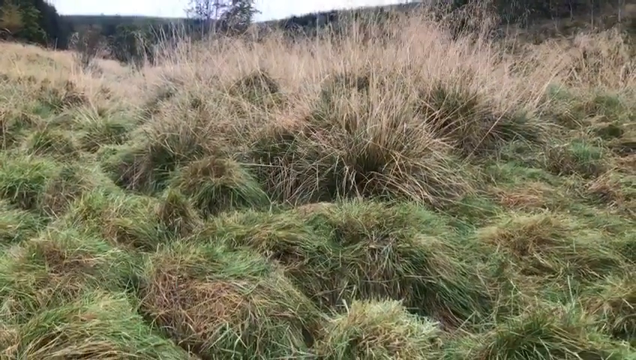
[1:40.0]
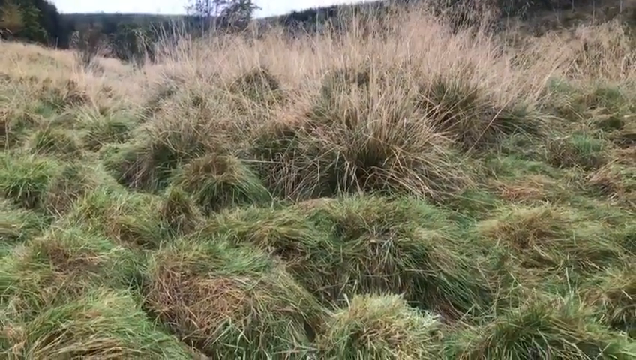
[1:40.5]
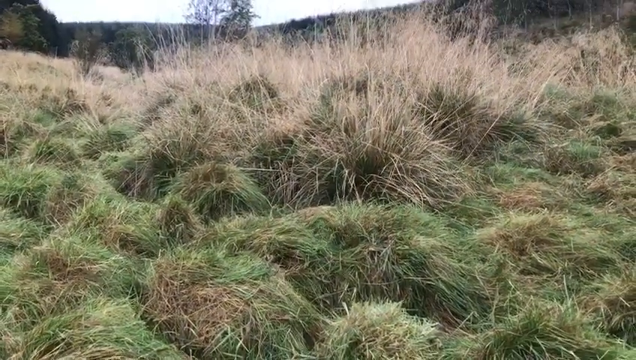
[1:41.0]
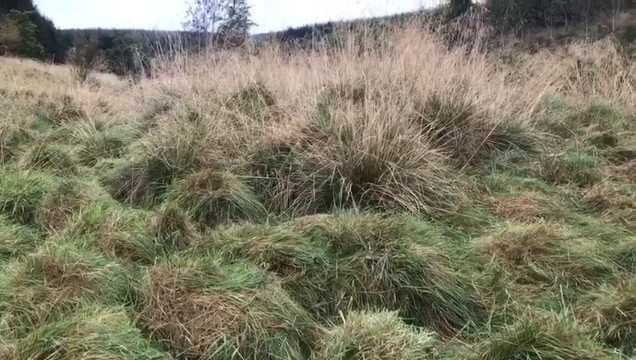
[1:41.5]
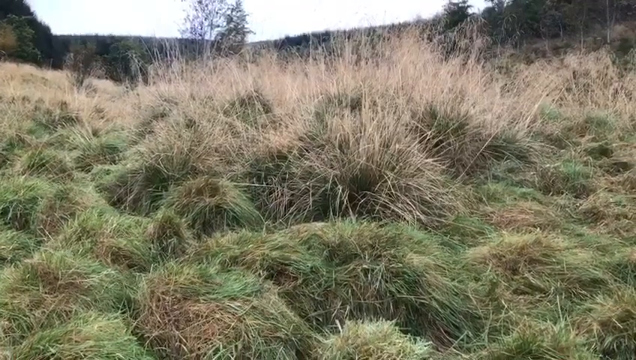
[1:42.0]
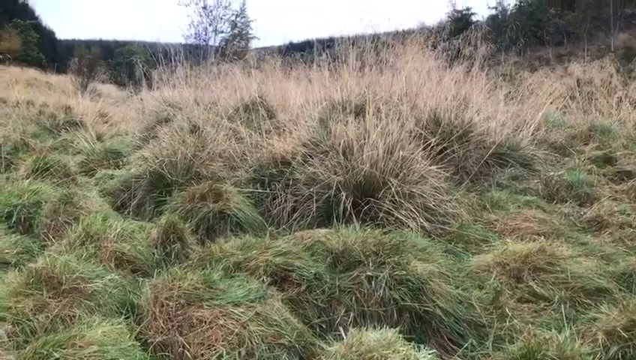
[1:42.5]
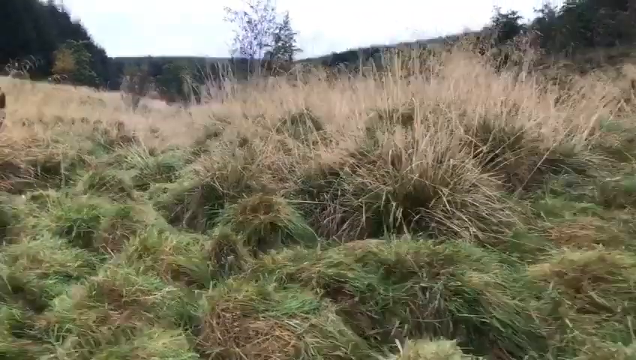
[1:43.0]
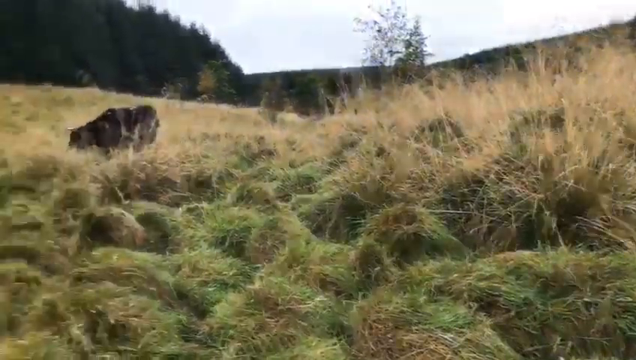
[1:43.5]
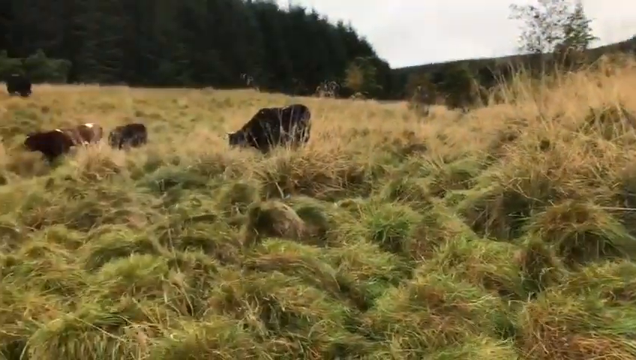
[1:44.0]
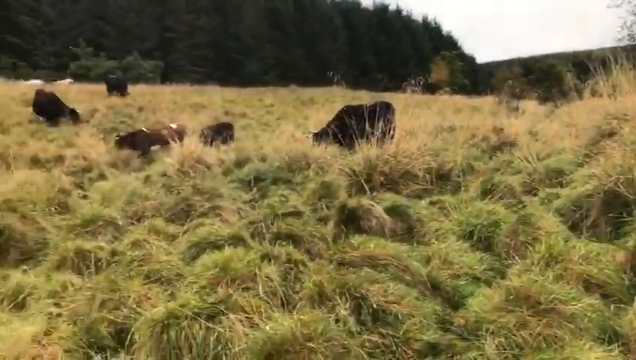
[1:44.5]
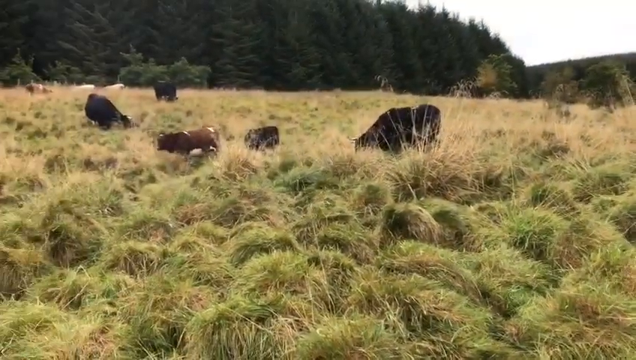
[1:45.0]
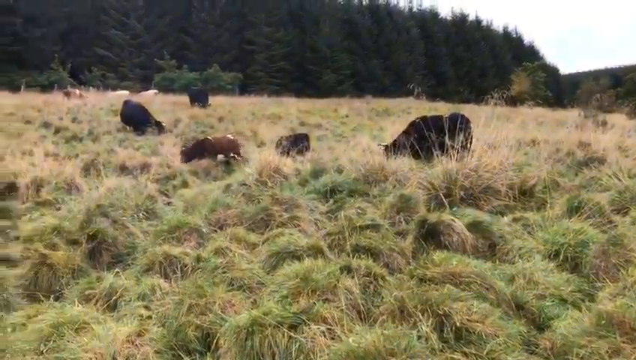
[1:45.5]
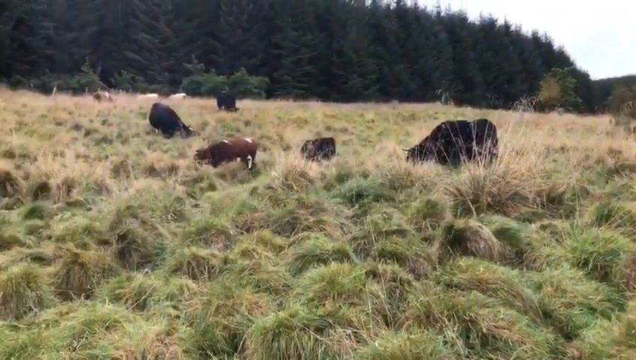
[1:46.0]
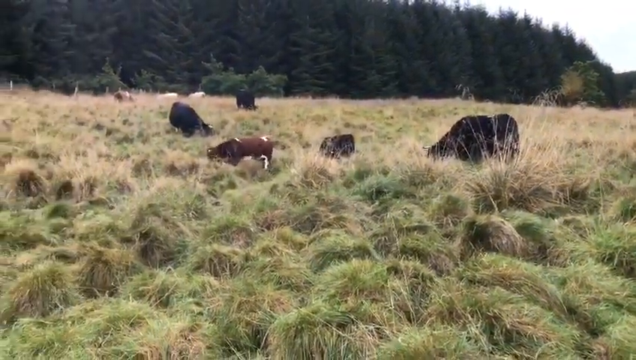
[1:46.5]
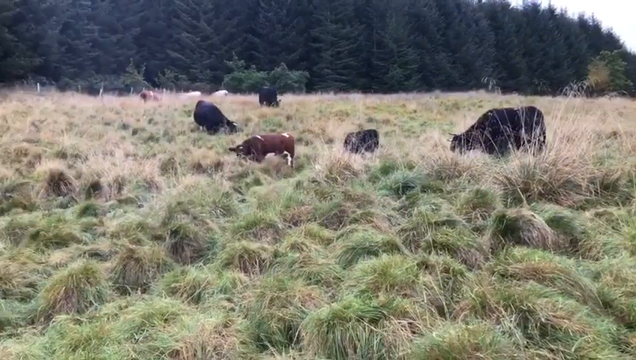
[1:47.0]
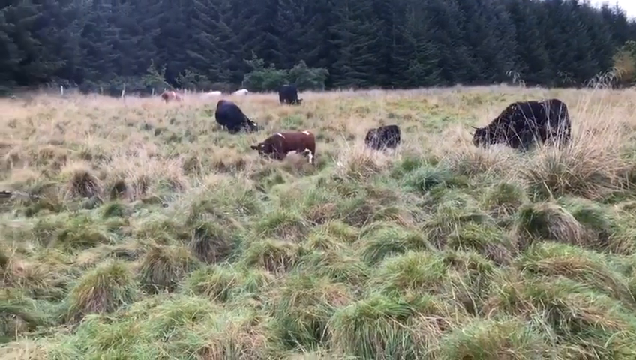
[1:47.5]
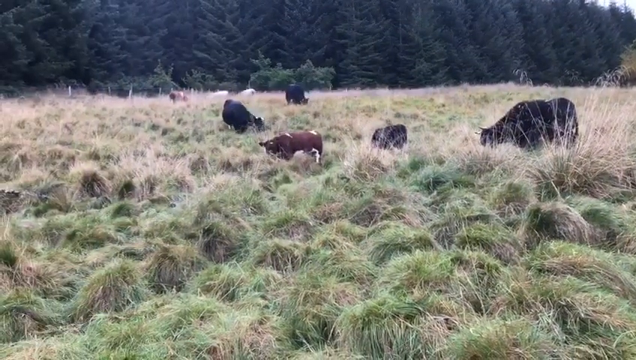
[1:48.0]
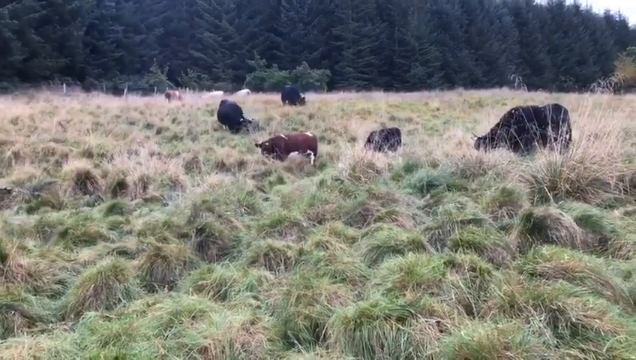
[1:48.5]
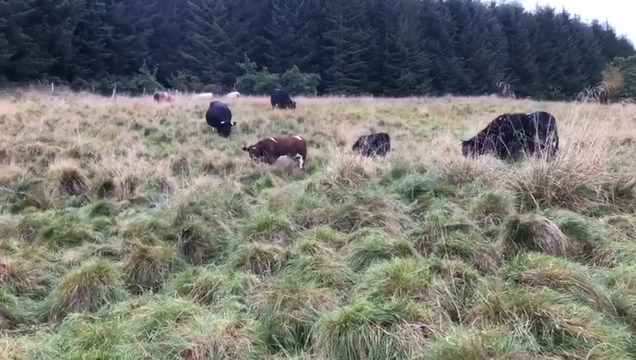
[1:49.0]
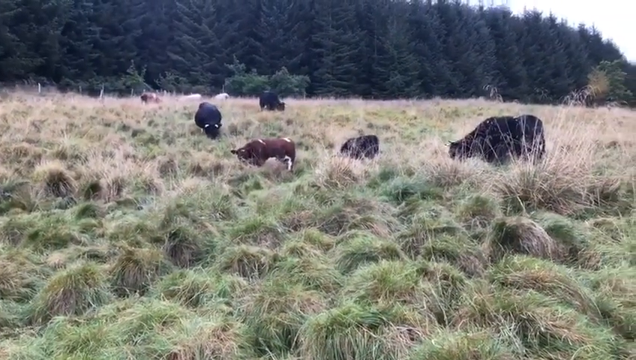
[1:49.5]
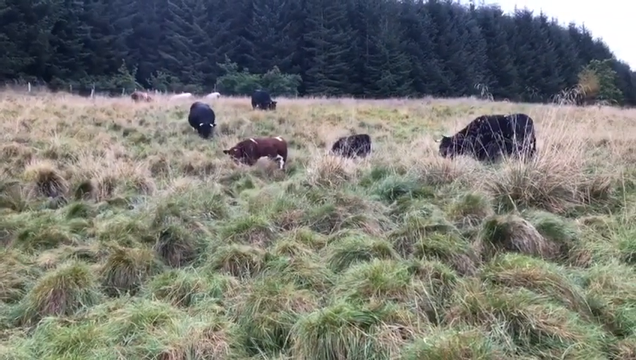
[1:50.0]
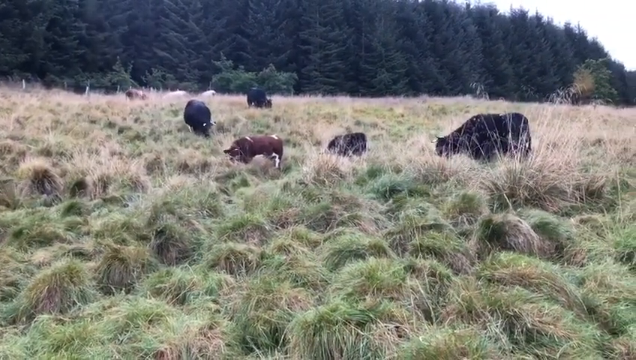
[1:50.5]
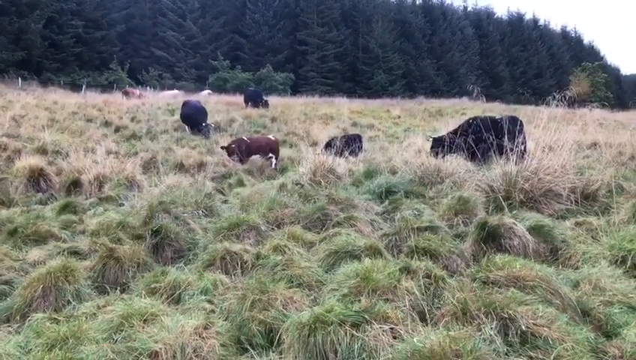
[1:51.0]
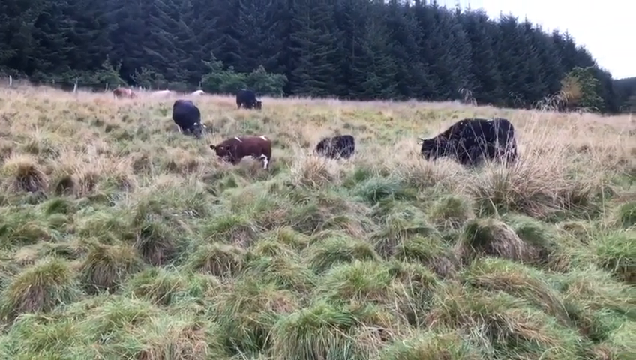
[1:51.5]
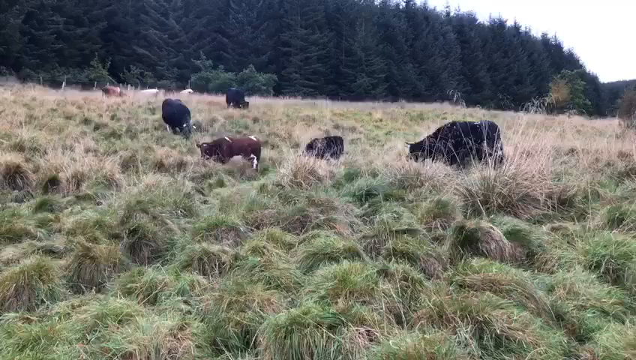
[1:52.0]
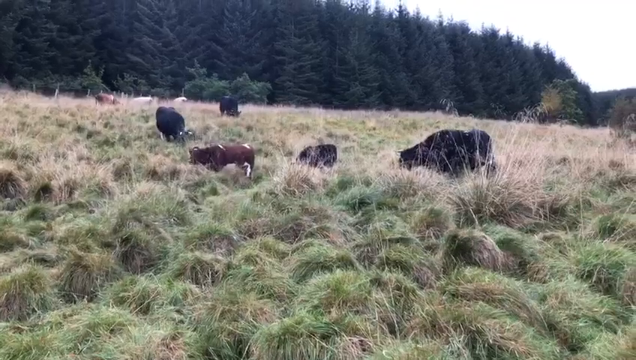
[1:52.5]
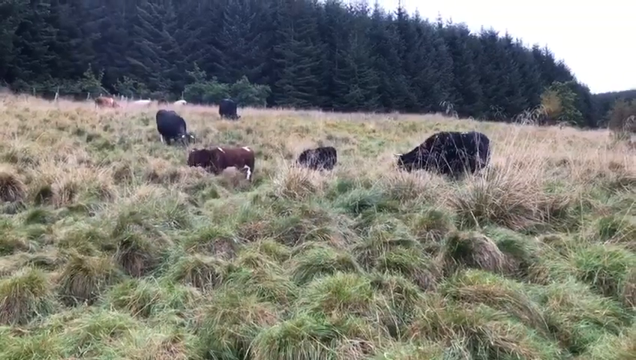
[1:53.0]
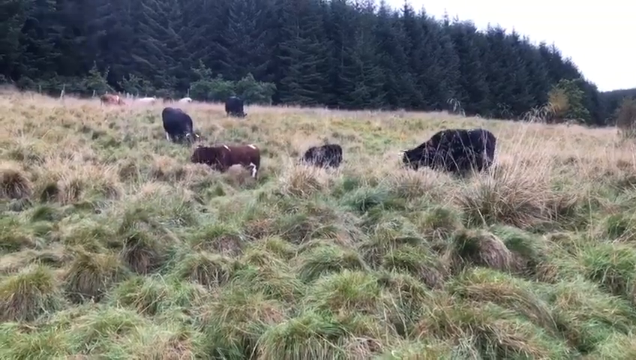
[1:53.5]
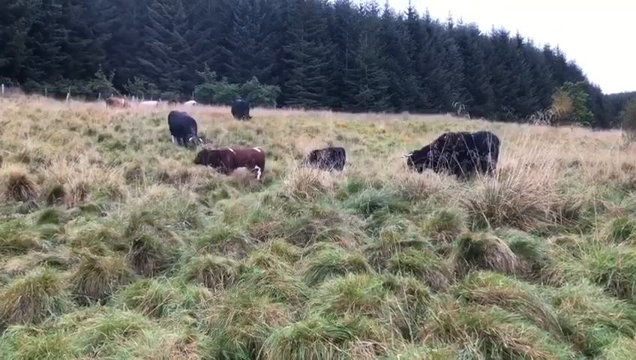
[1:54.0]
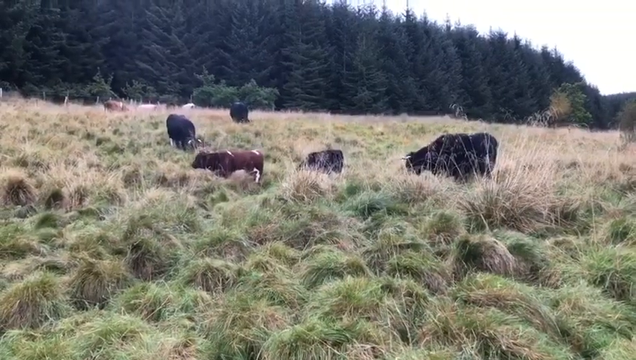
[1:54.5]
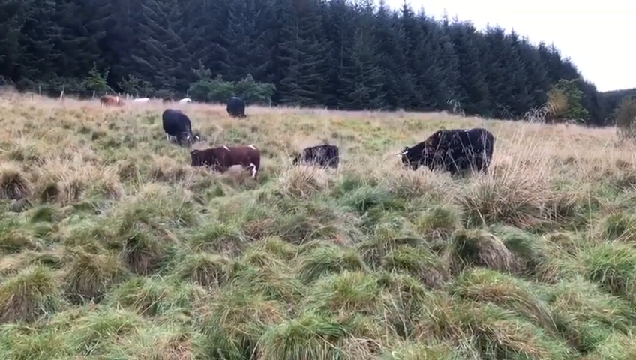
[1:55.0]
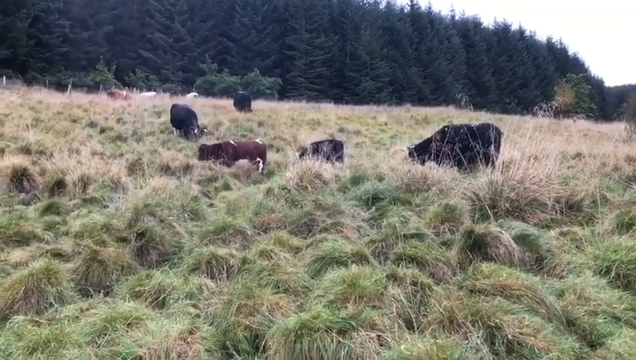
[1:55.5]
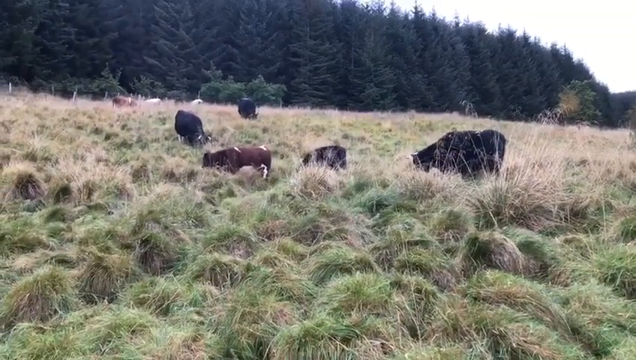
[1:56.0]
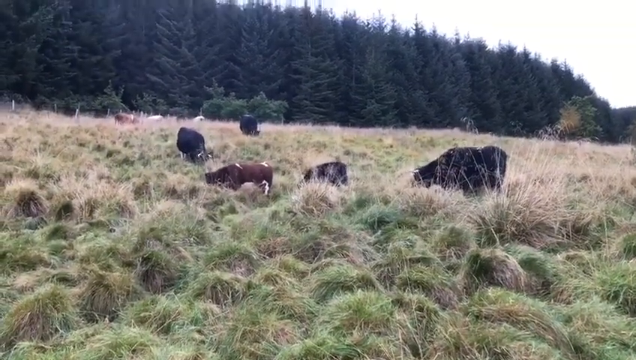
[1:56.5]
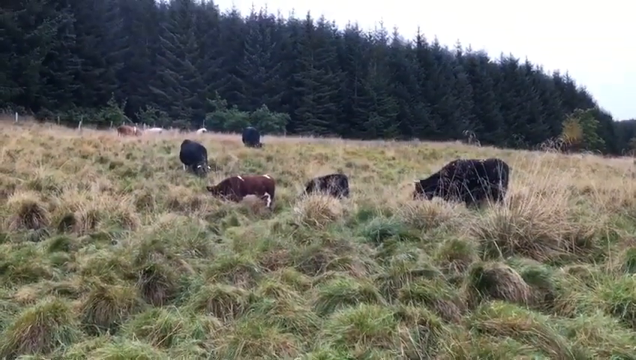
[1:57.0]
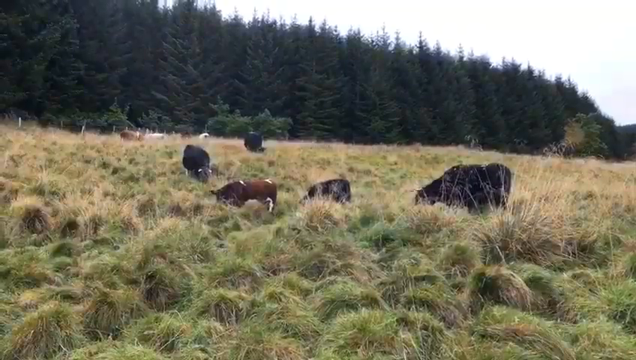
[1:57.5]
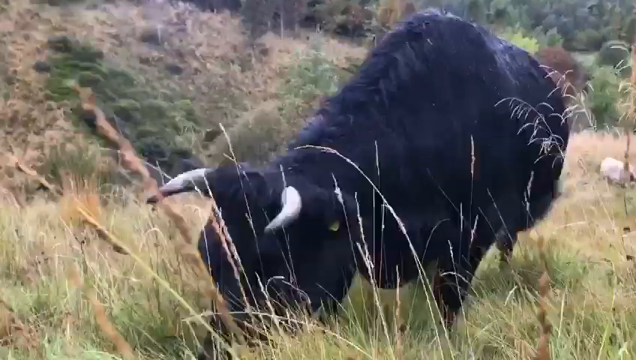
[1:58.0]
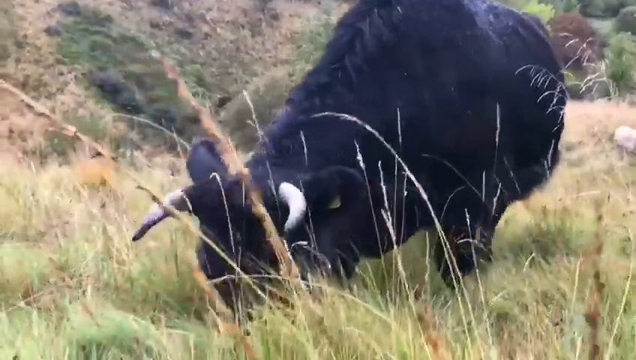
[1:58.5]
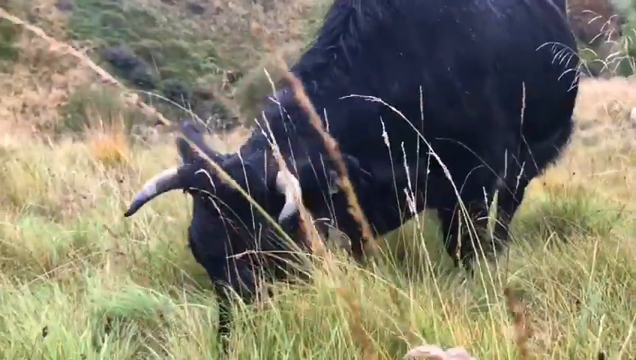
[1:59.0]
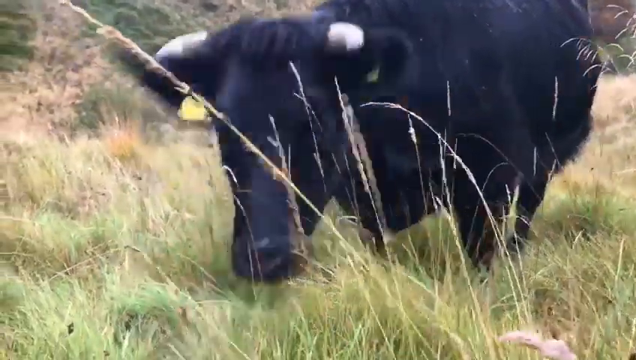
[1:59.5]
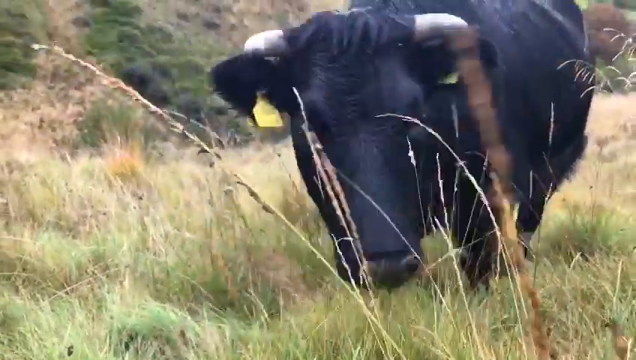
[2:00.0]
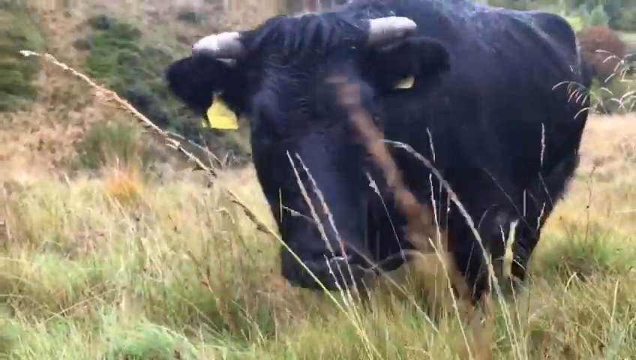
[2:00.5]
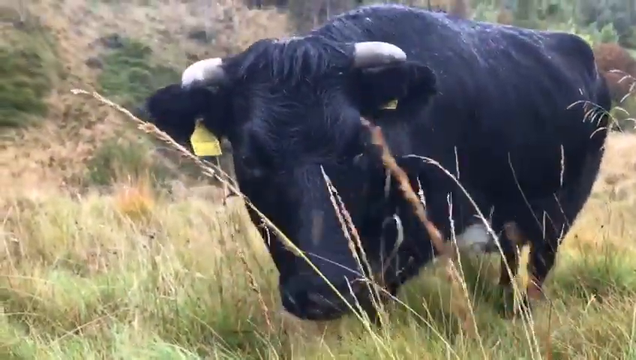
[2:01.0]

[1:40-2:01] Lush pasture grass on a hillside continues. The camera pans to the left, where a number of Holstein cows graze on what appears to be a valley-bottom pasture. A noticeable tree line stands in the distance, the trees appearing to be tall, old-growth pine, with glimpses of an overcast sky above. A close-up then shows a black Holstein cow standing in the pasture, facing the camera. It has noticeable horns and orange square ear tags clipped to each ear. The cow grazes on the grass, then lifts its head and stares directly at the camera.